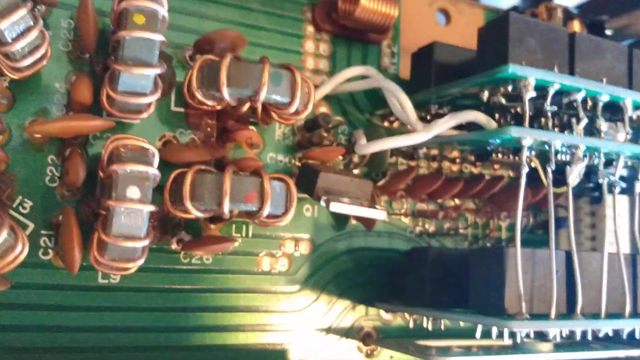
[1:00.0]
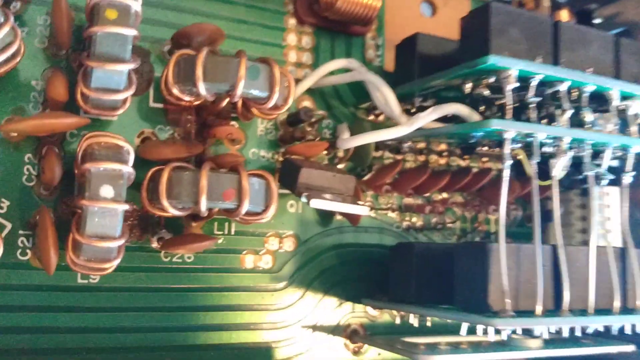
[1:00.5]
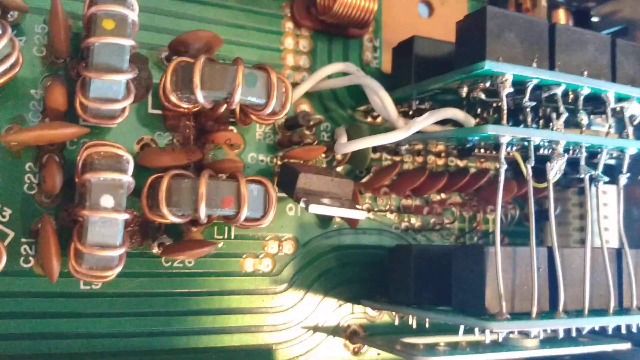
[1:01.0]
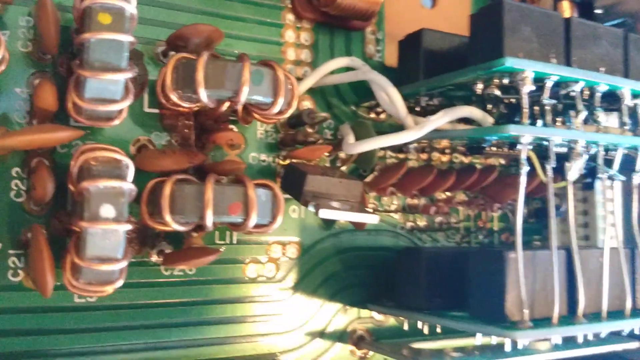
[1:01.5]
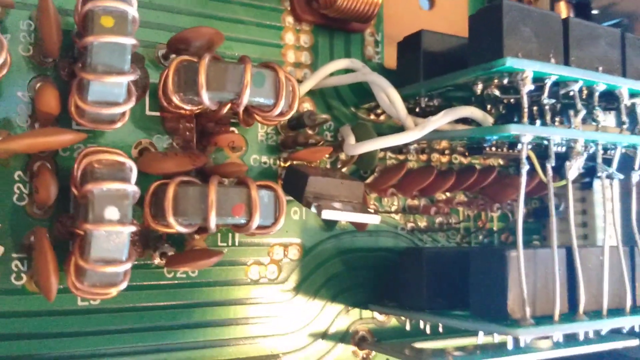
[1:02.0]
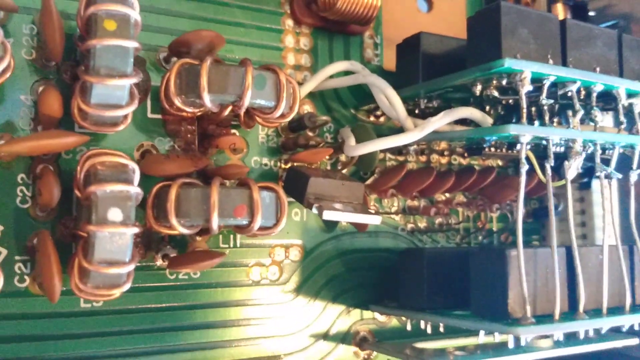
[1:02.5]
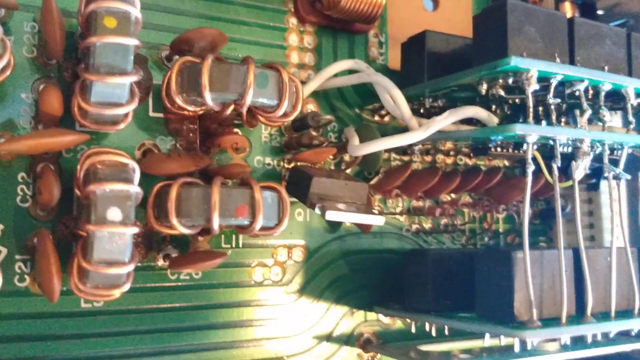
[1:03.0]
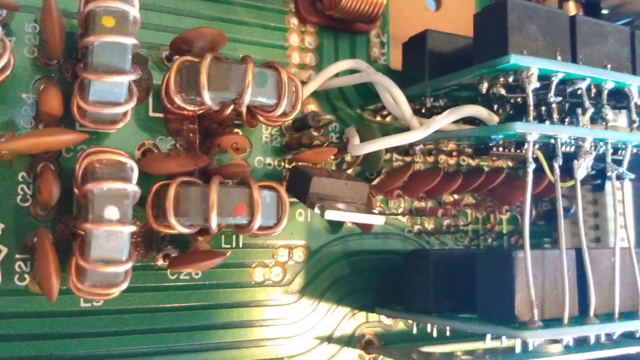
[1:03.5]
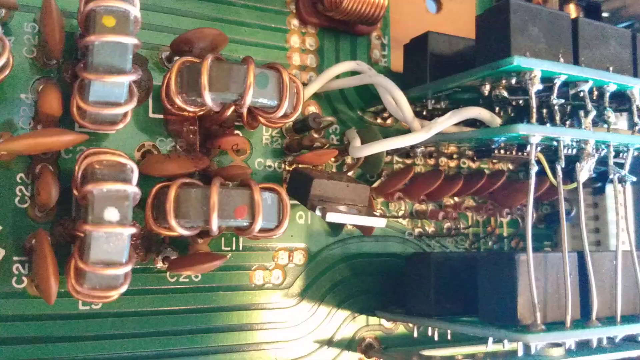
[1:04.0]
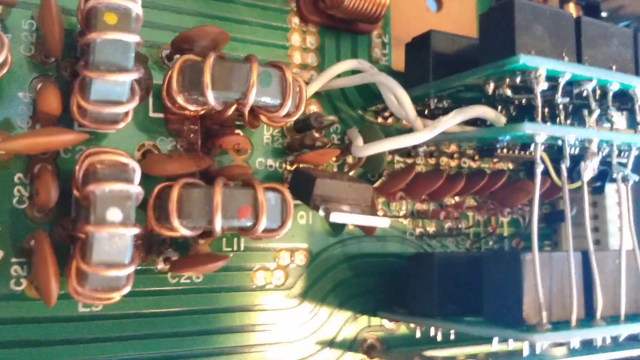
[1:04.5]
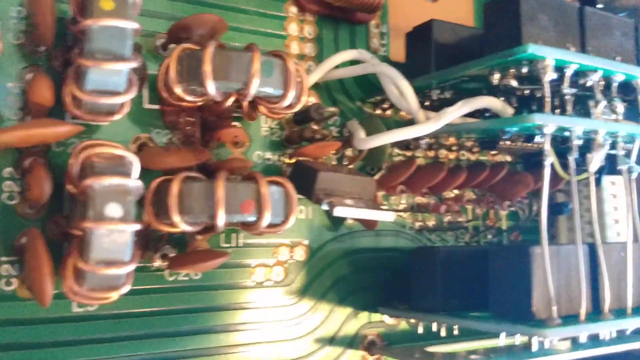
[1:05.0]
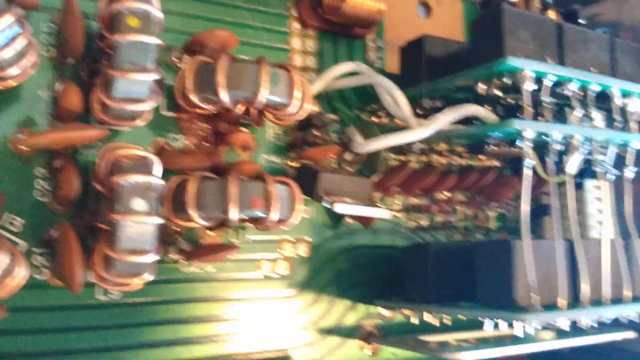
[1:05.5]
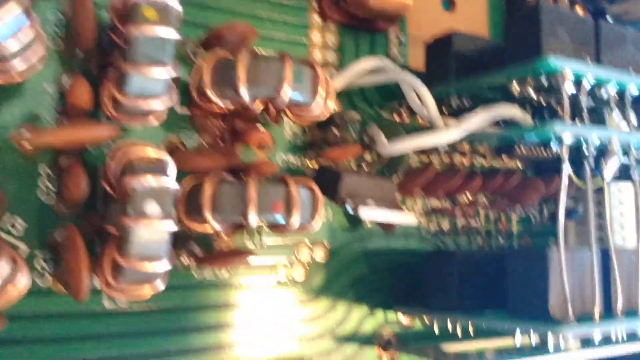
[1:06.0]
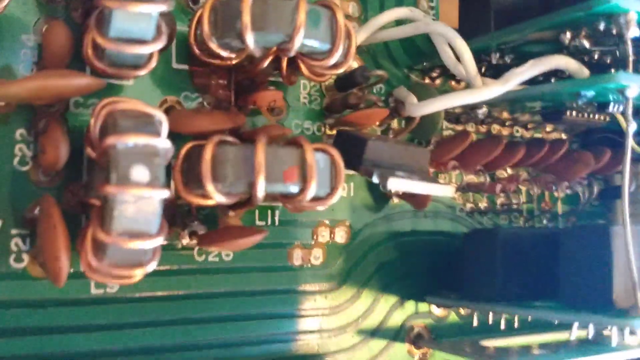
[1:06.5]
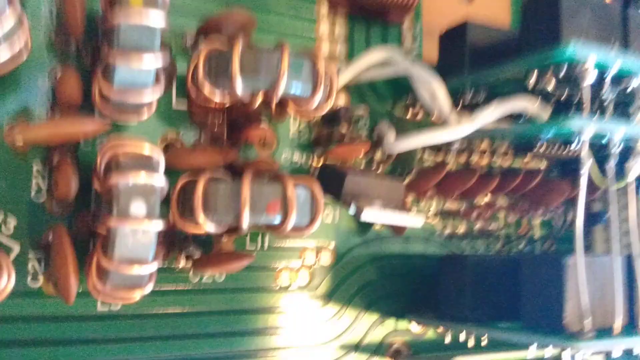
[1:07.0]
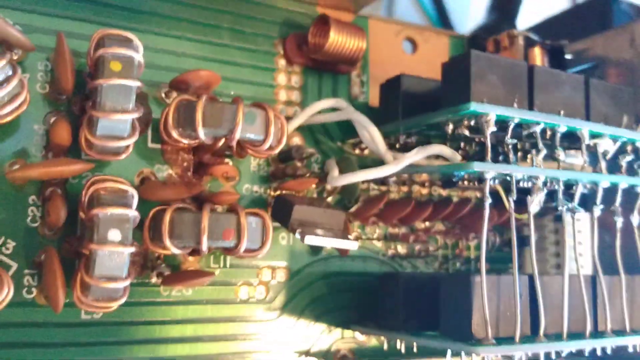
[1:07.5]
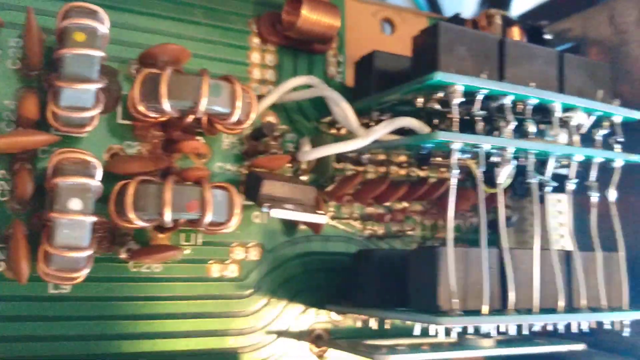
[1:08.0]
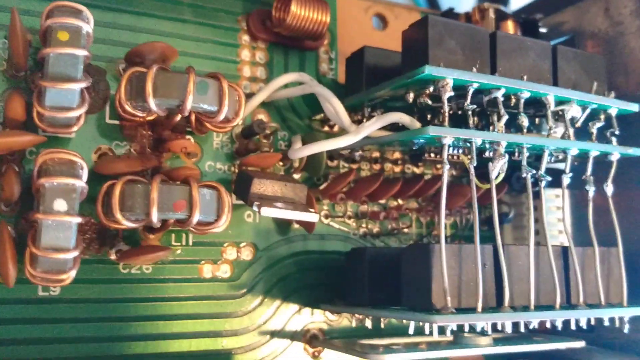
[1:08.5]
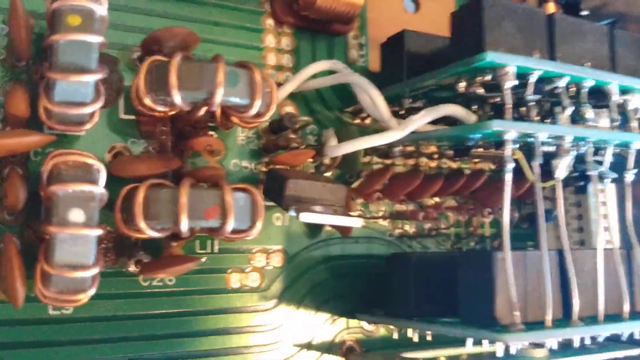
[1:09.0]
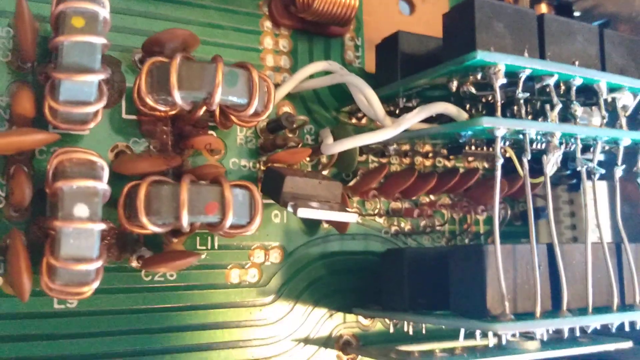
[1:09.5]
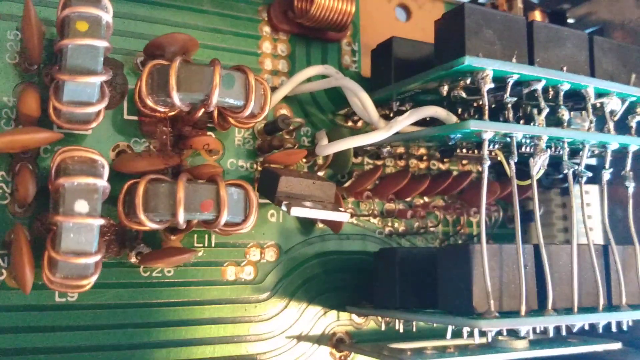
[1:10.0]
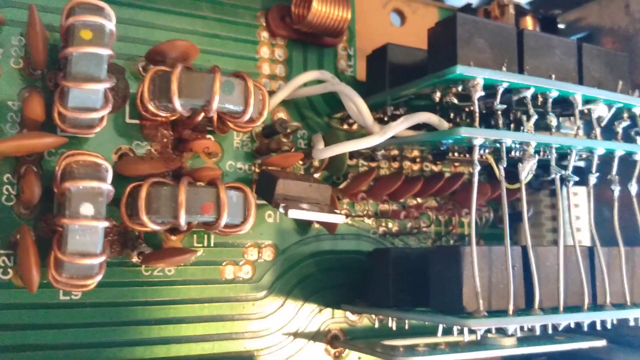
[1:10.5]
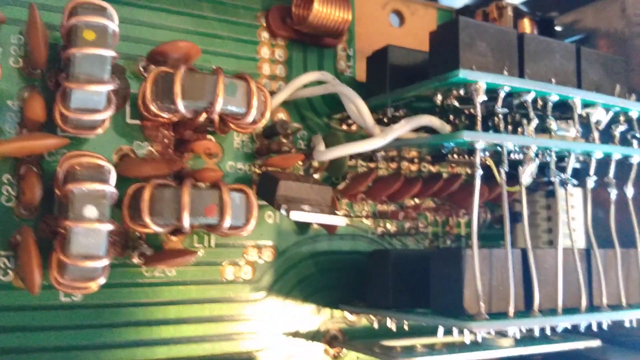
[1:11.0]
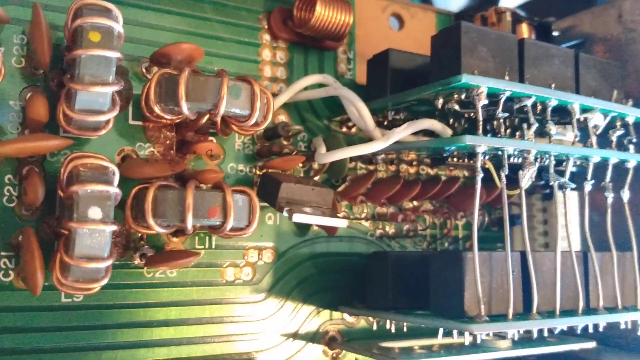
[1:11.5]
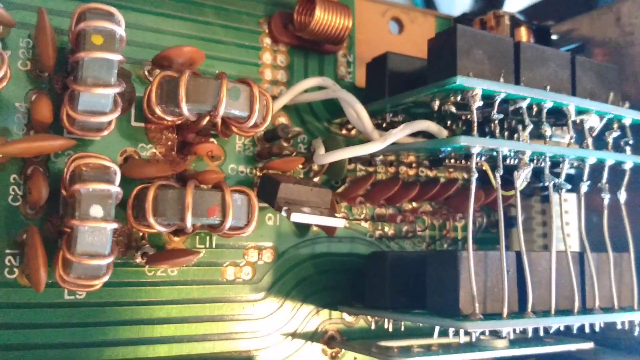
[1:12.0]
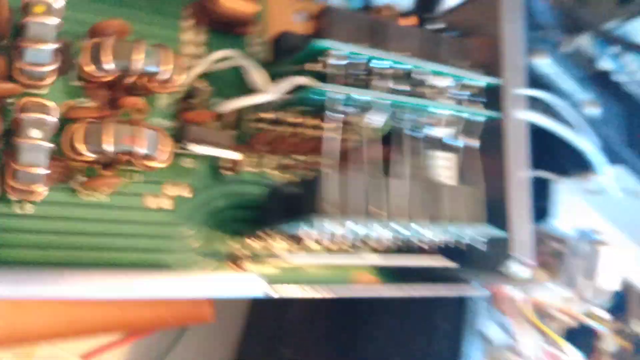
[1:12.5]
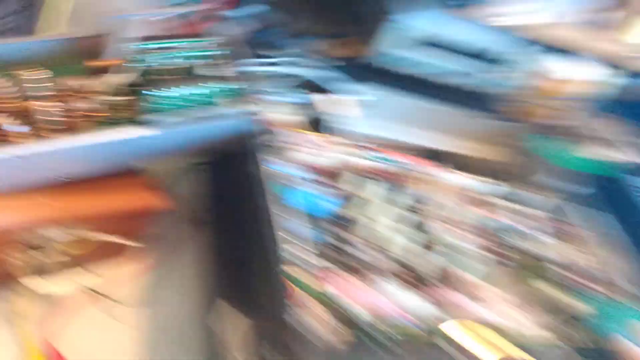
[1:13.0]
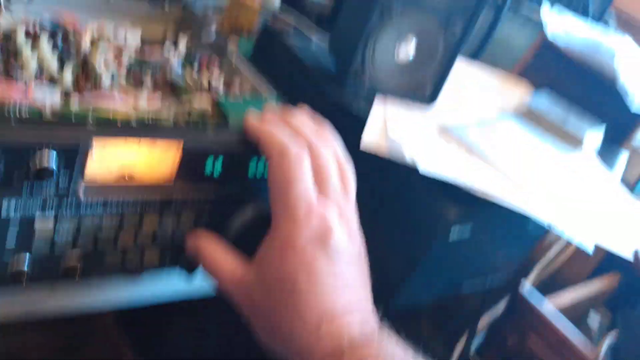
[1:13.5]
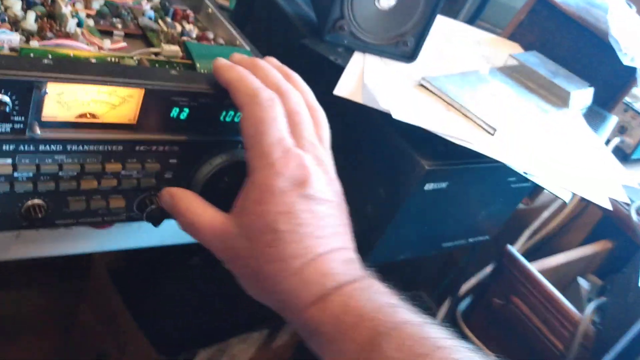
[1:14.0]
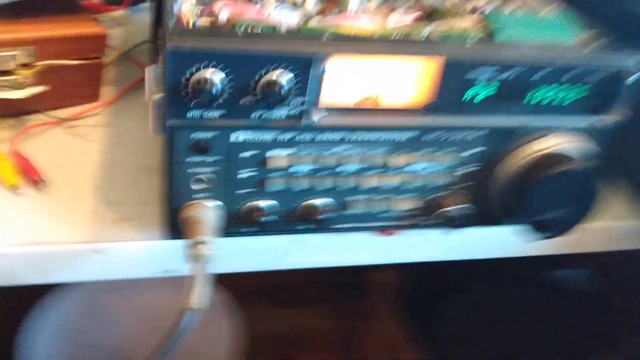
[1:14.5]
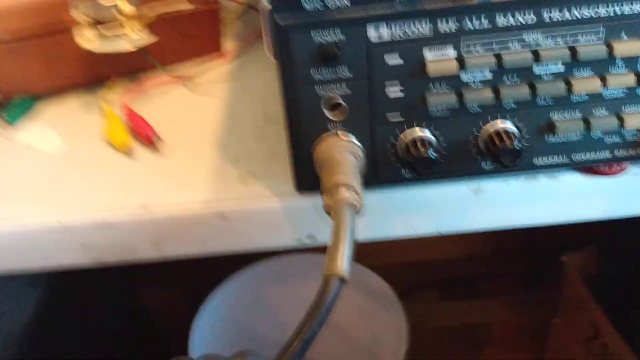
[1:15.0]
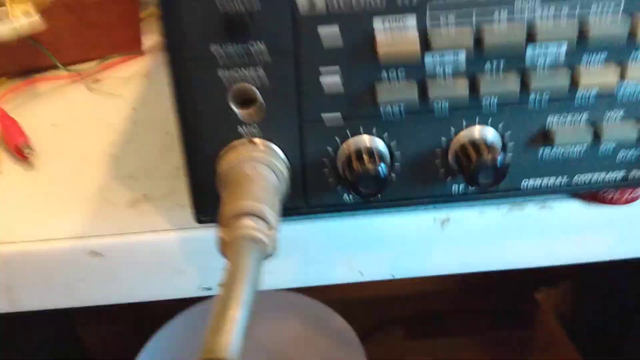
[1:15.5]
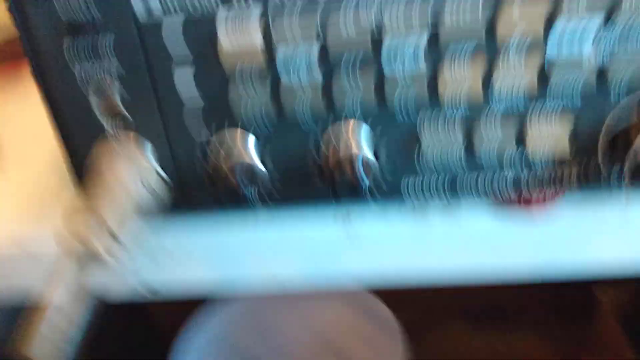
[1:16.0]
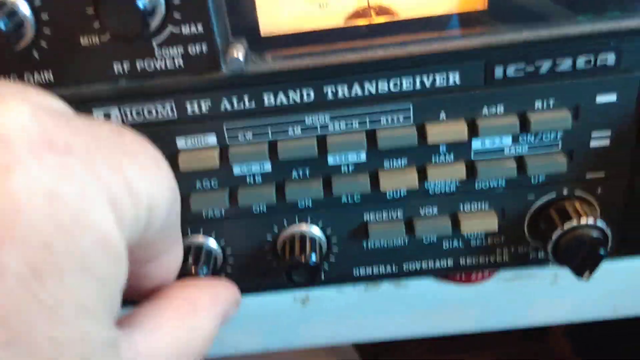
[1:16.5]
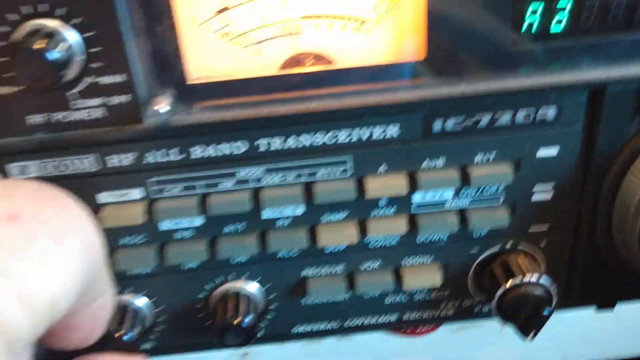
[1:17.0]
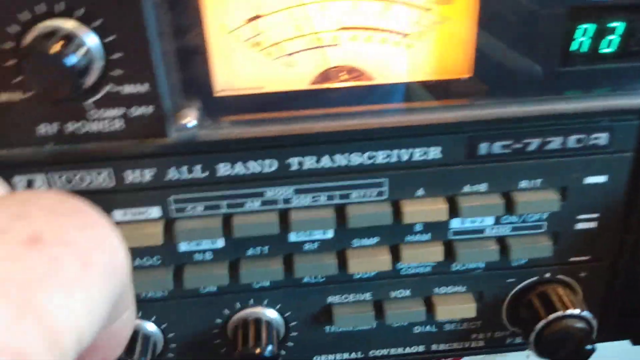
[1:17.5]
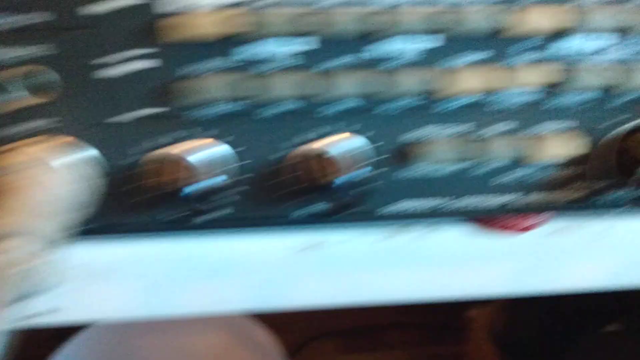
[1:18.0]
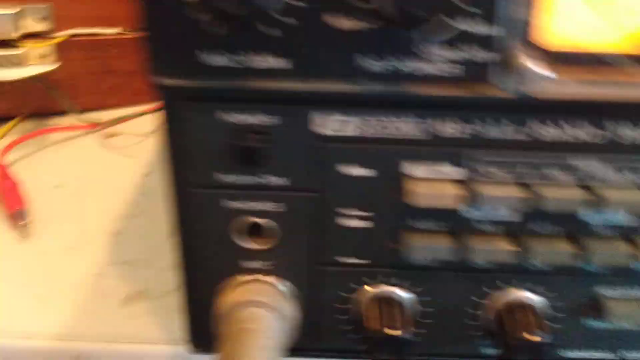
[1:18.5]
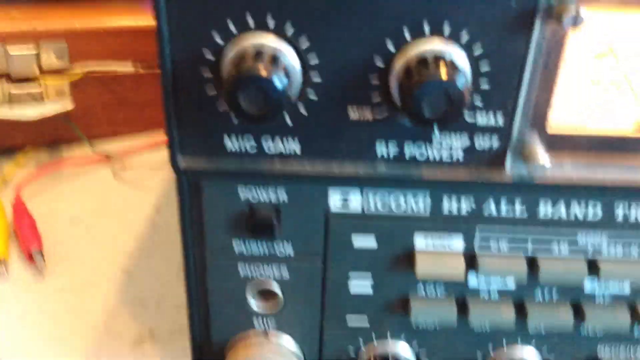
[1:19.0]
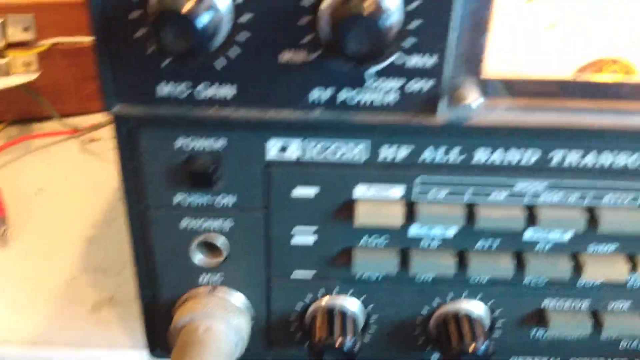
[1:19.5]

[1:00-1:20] The camera zooms in a little closer, and the coils look like they are made from a circular, donut-shaped magnet, with strands of copper wire wrapped around the donut, passing through its middle and around the outside. The circuit board underneath has white text on it, such as "C21", "C22", "C-50", "C-25" and "C-24". The board's surface is light green with strands of darker green running through it. In the bottom right there is glare: a light off to the right reflects off the shiny surface of the board, making it glow a bright yellowish-green. To the left of the magnet coils are some electronics that look like small brown pillows or like an anvil, soldered into the circuit board. The camera then zooms back to the right, showing someone's hand resting on the right corner of the transceiver.